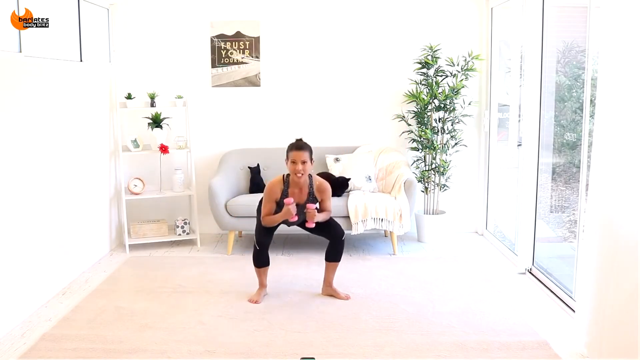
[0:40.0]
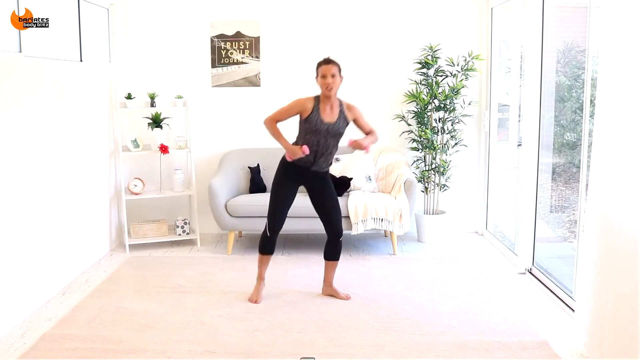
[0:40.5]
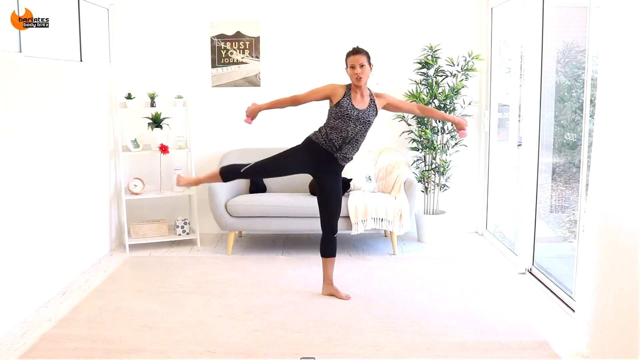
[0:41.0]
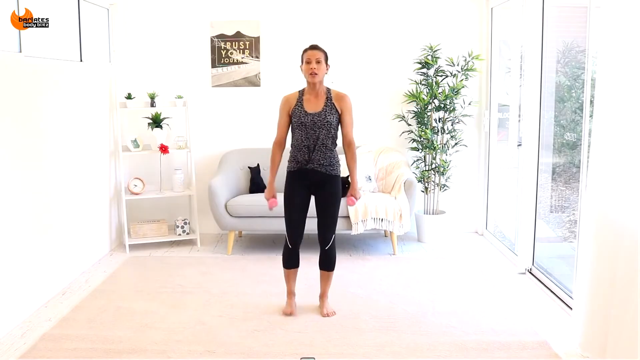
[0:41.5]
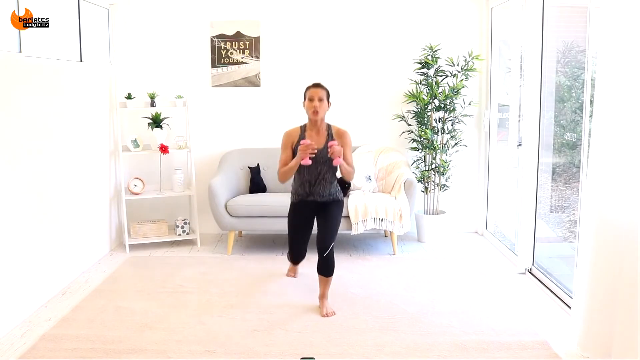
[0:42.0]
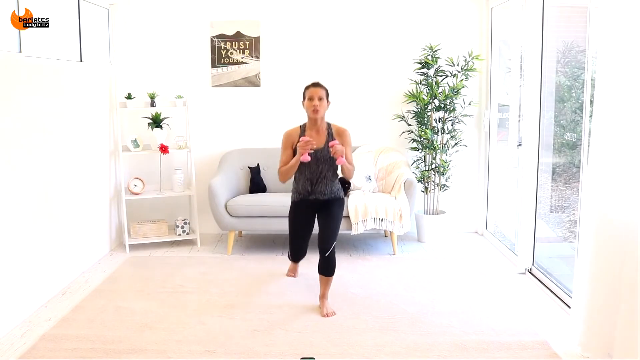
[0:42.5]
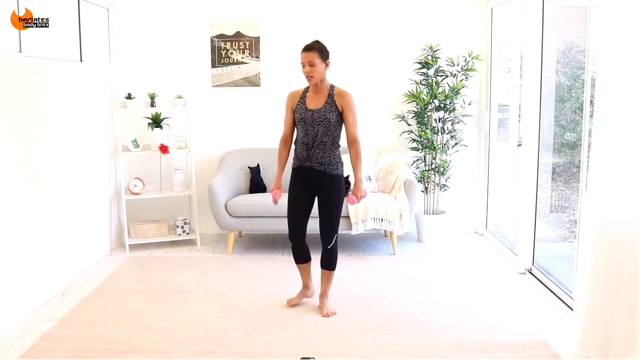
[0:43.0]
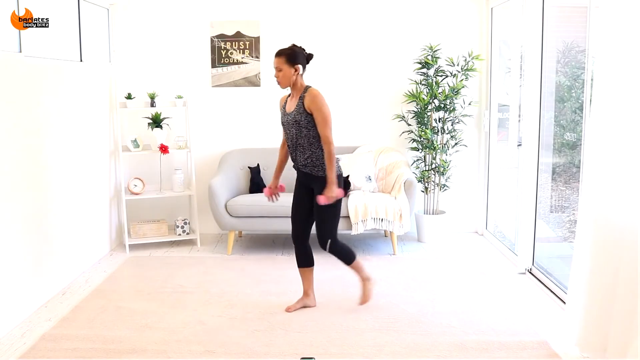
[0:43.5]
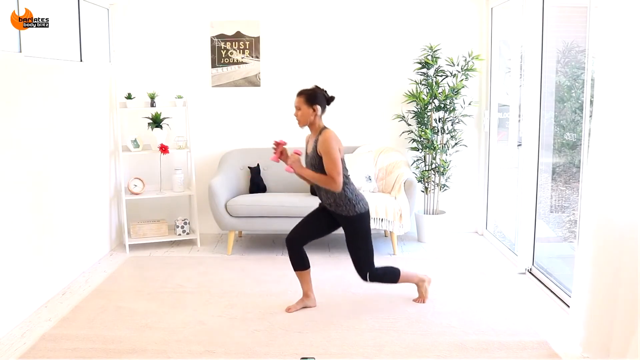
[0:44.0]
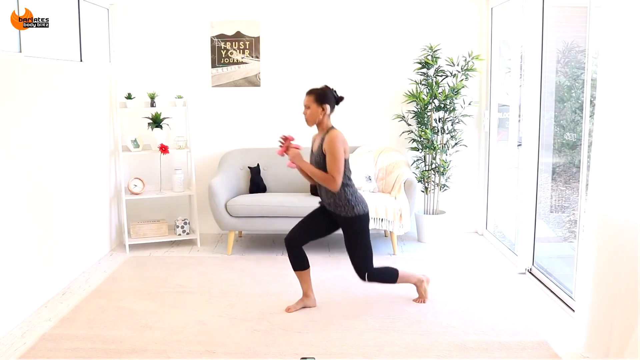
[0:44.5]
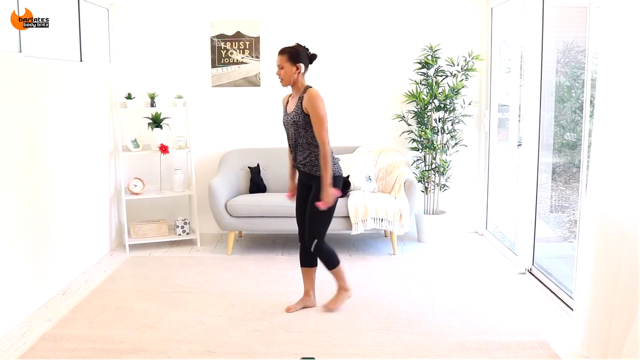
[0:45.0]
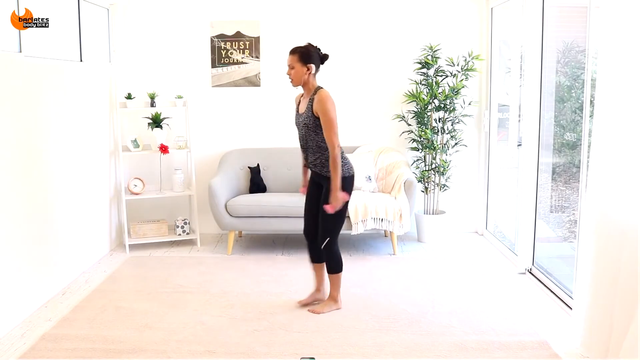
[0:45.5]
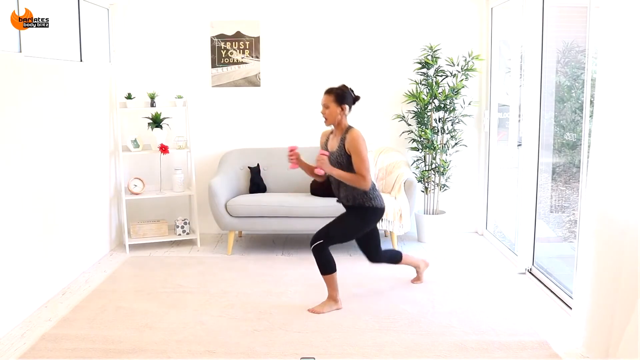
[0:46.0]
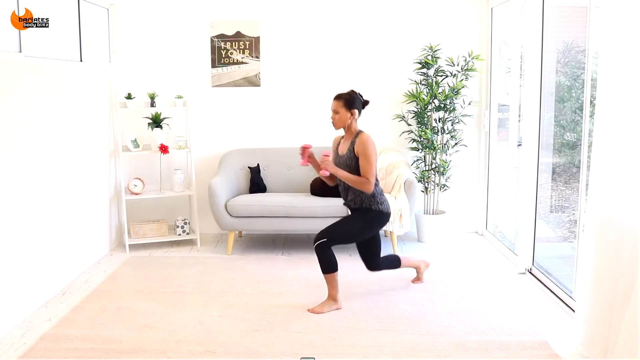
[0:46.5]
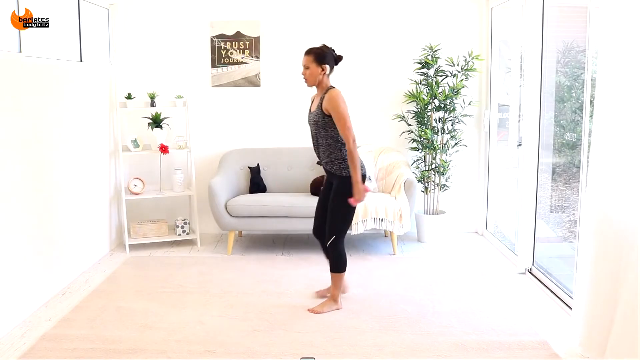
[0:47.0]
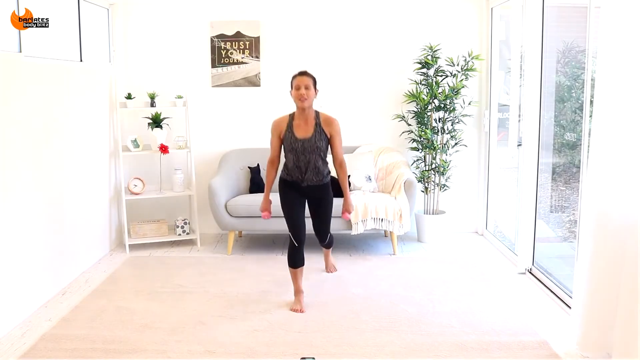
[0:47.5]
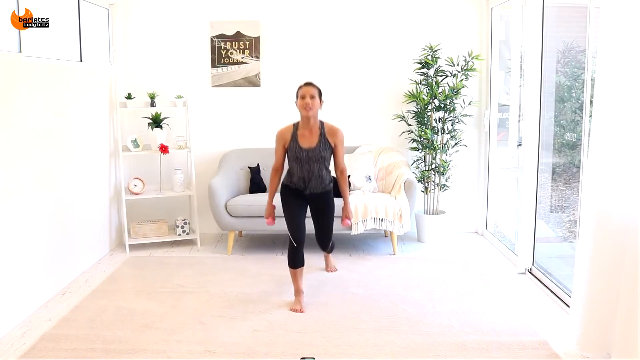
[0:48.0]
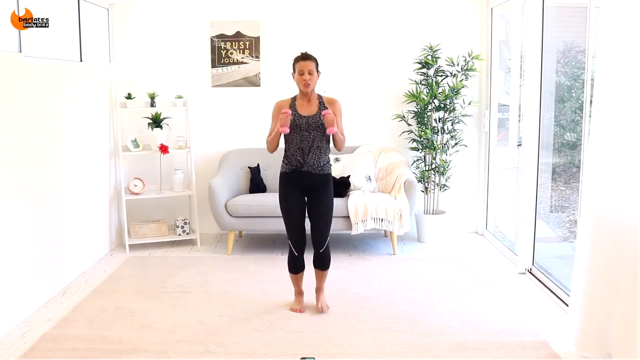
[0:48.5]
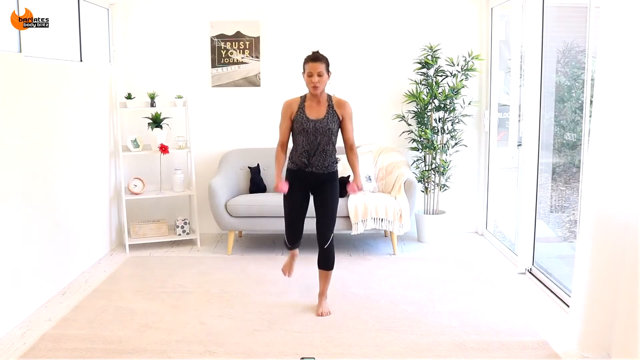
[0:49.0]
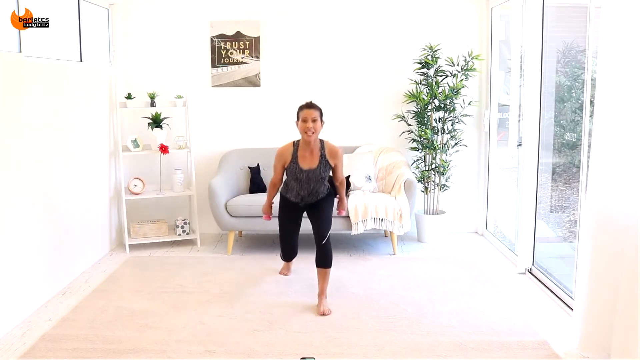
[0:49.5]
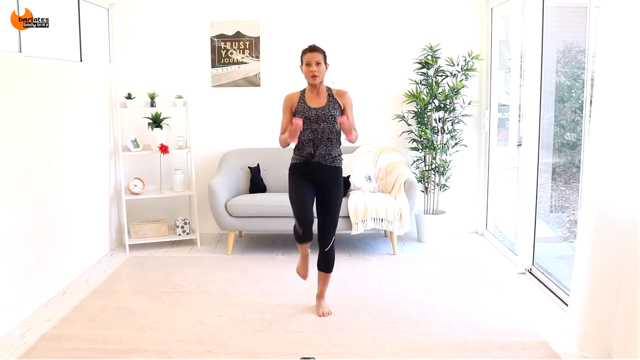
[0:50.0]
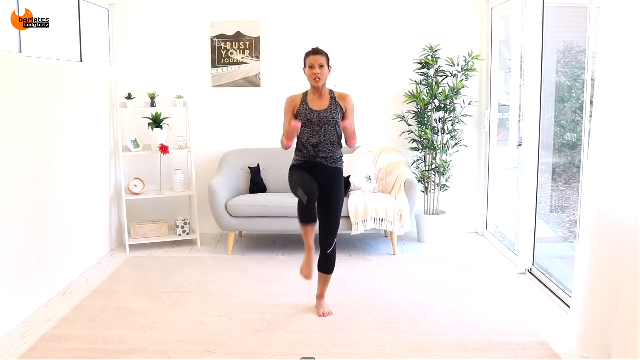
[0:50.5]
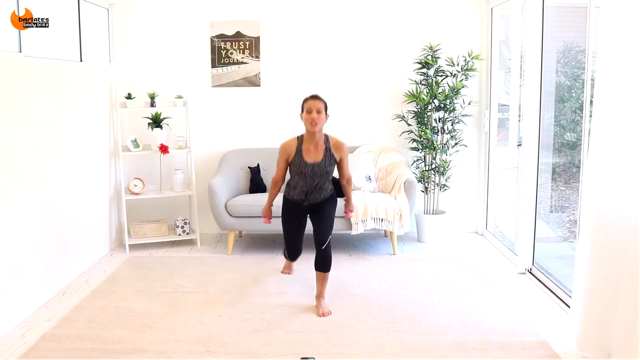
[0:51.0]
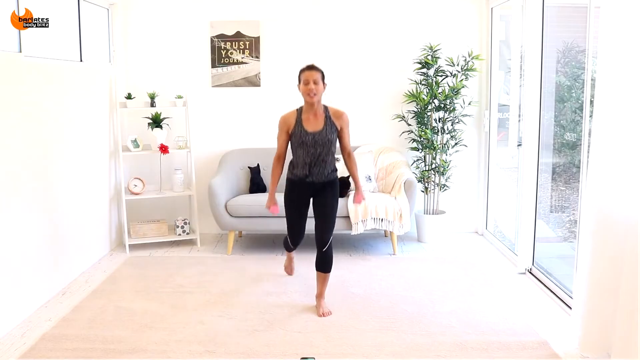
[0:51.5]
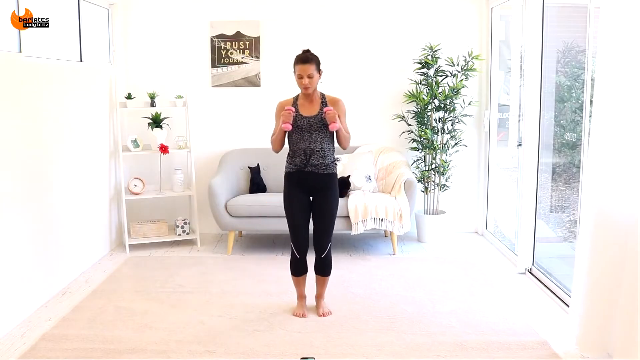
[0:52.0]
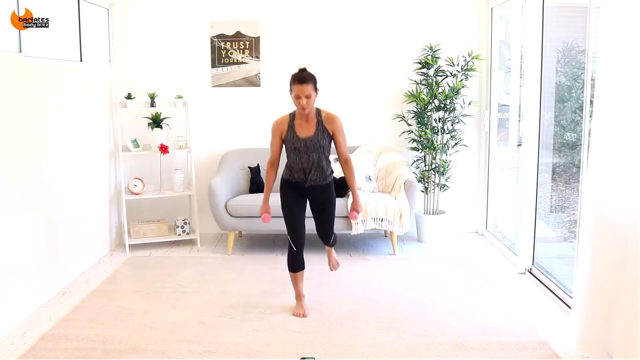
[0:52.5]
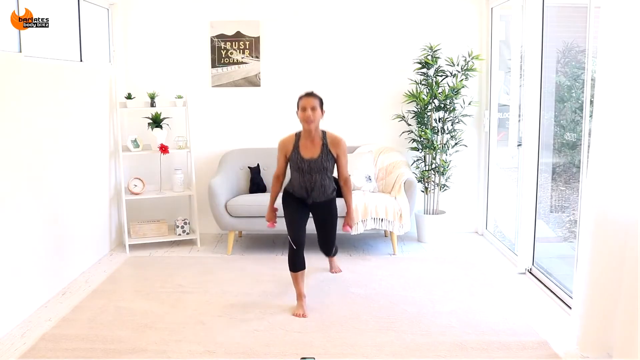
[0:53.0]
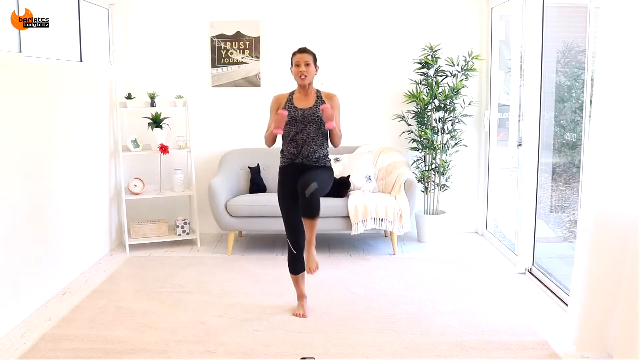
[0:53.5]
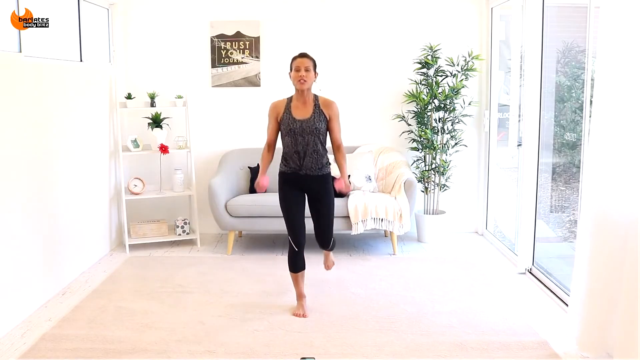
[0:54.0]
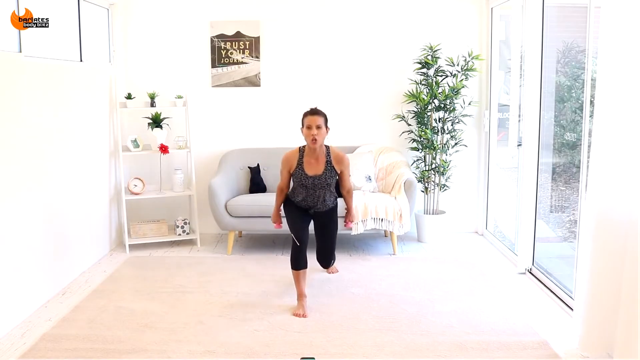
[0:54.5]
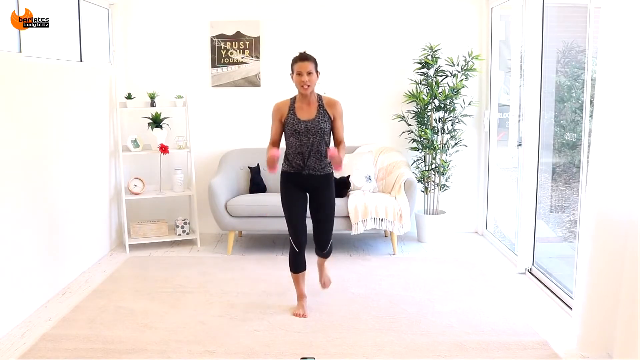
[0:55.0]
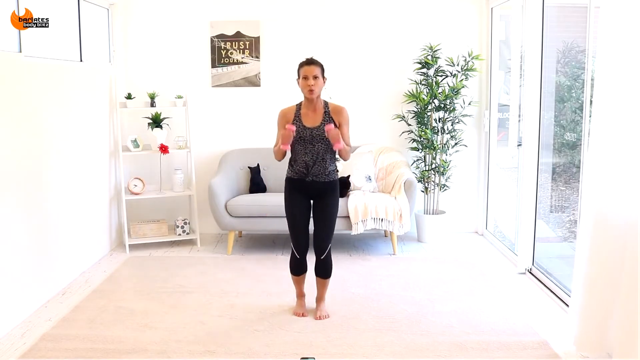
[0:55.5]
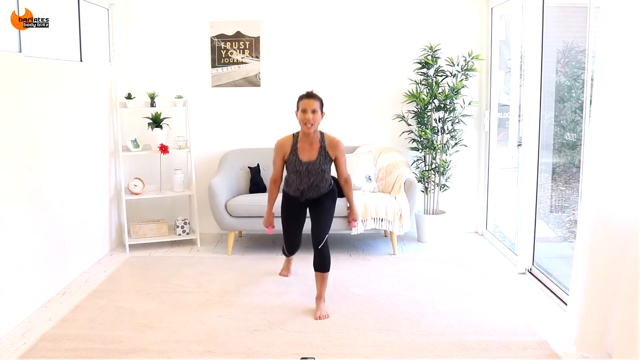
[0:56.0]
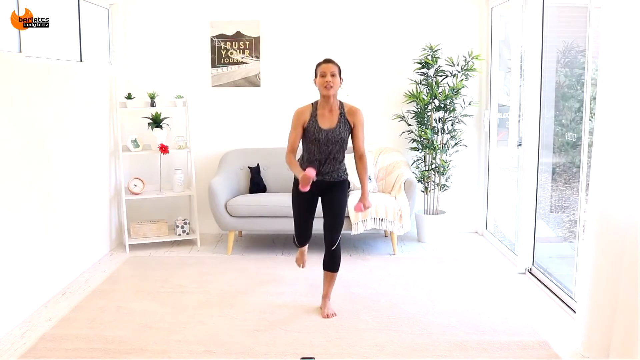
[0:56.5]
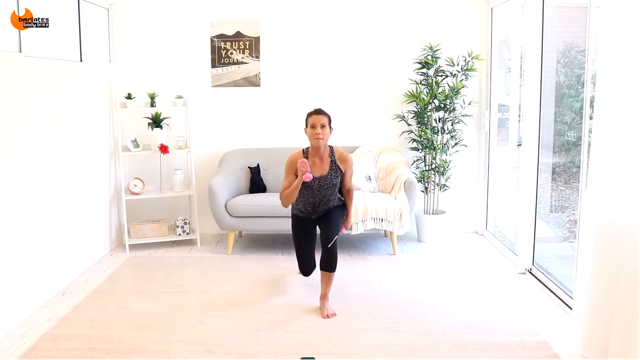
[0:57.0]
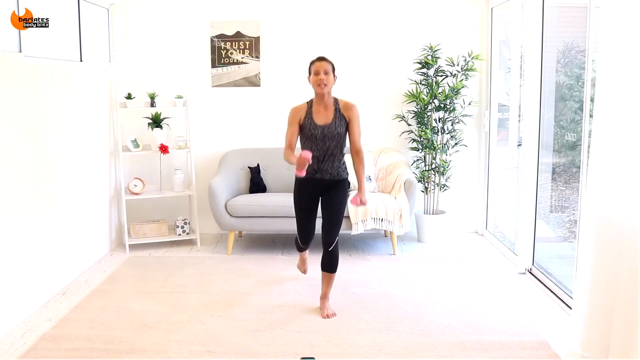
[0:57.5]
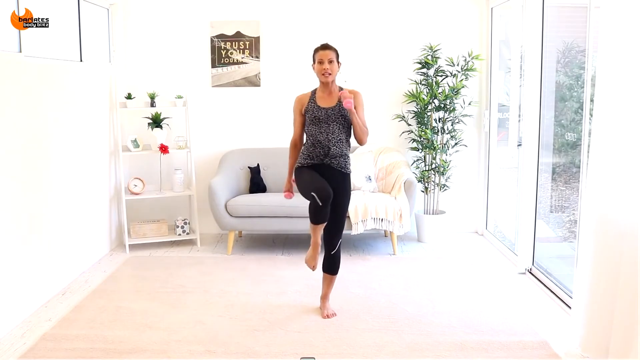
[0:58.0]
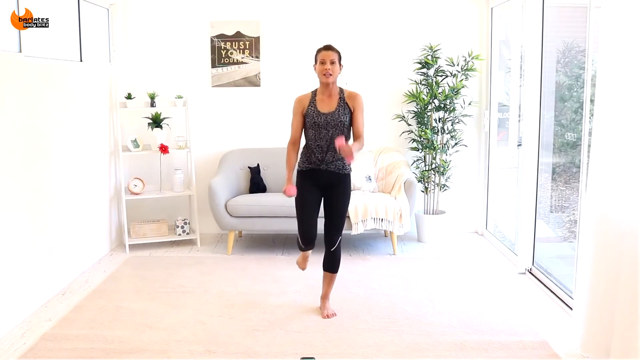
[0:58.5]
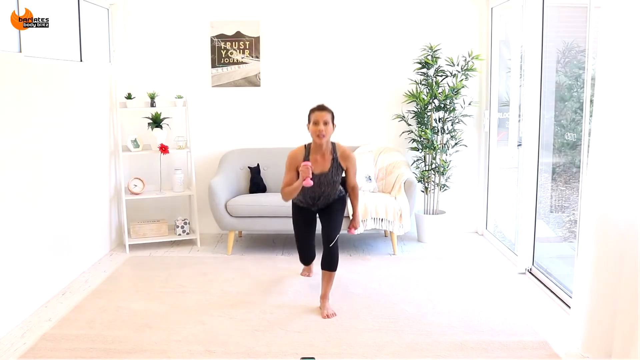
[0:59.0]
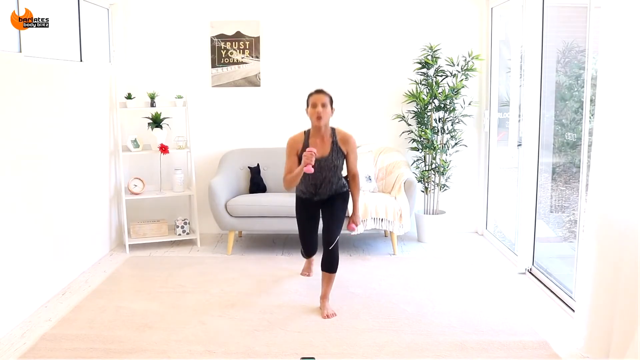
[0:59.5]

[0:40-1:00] In the bright room, the woman does a couple more side kicks on her right side and then goes straight into regular lunges, still holding the pink weights. She lunges back first, then turns so her side profile is visible and does a few lunges from that angle before switching back to face the front for one more lunge. She then continues lunging, but when stepping back up she does a knee lift before stepping back and completing the lunge. She does several of these, slowing down after the second set to show the proper form, and then shows one more.